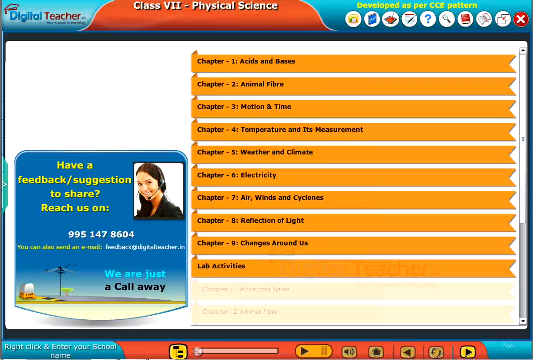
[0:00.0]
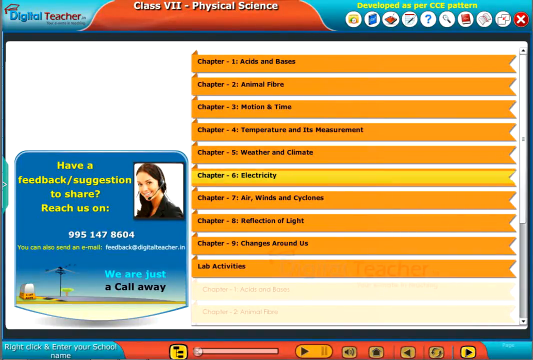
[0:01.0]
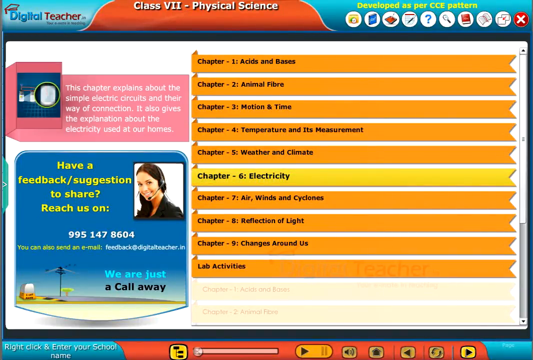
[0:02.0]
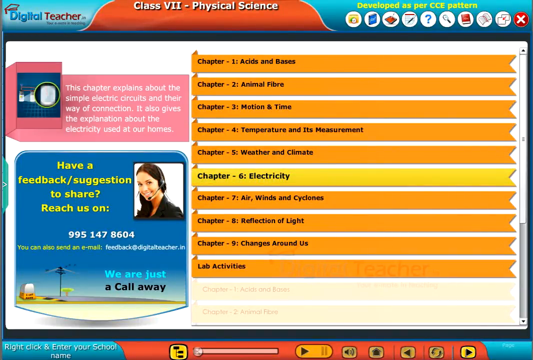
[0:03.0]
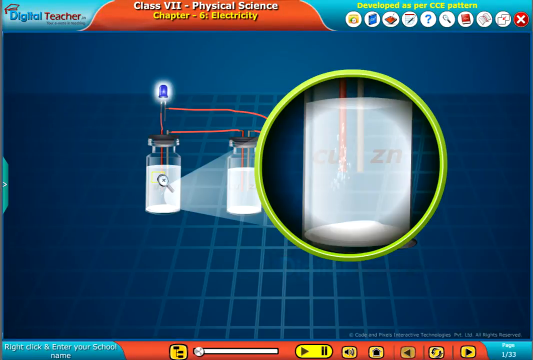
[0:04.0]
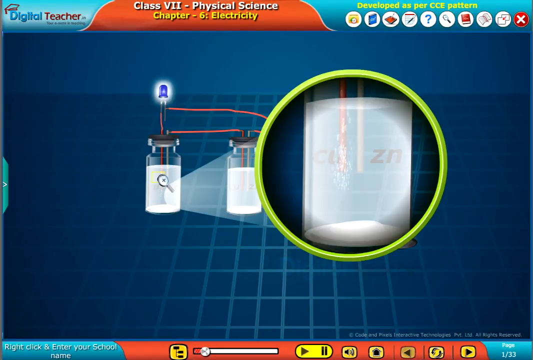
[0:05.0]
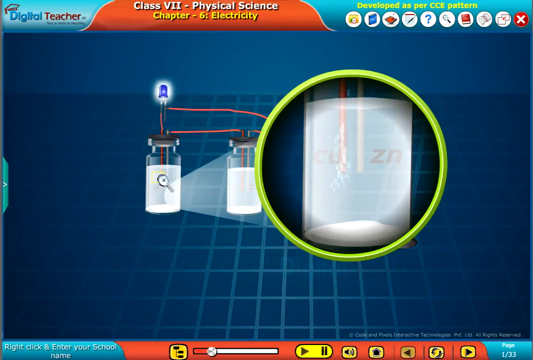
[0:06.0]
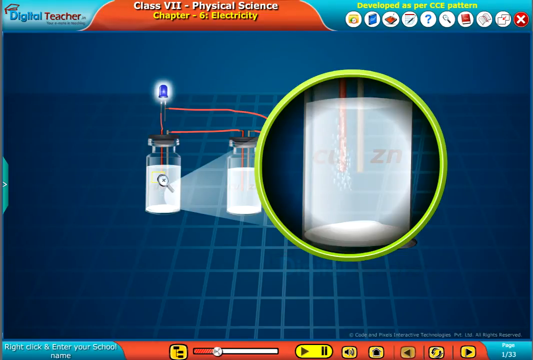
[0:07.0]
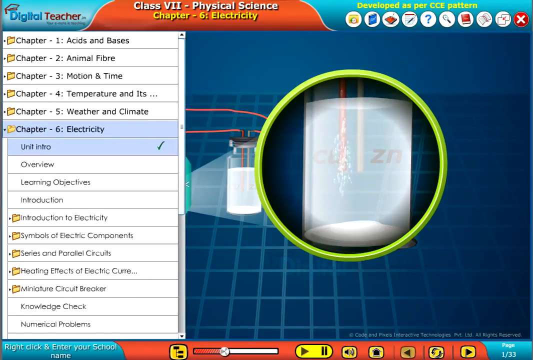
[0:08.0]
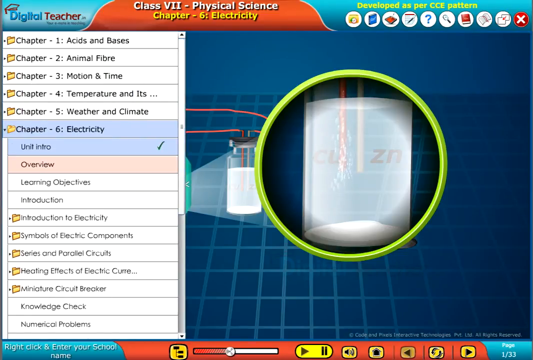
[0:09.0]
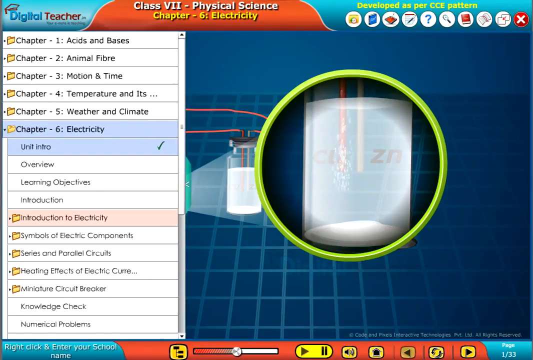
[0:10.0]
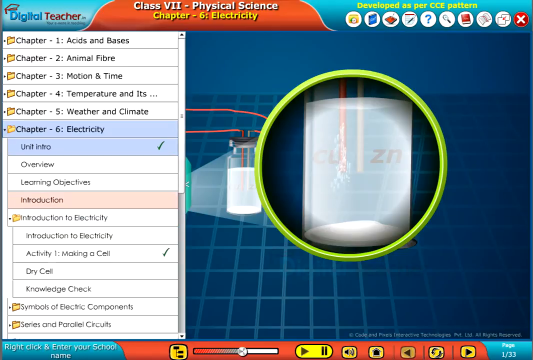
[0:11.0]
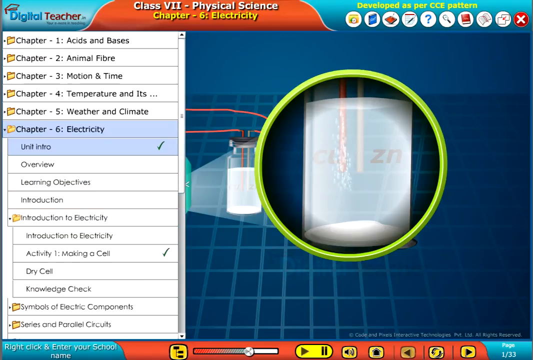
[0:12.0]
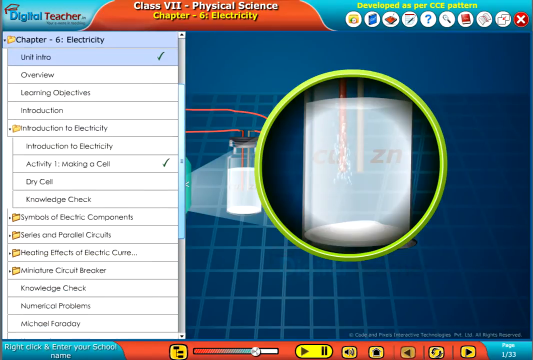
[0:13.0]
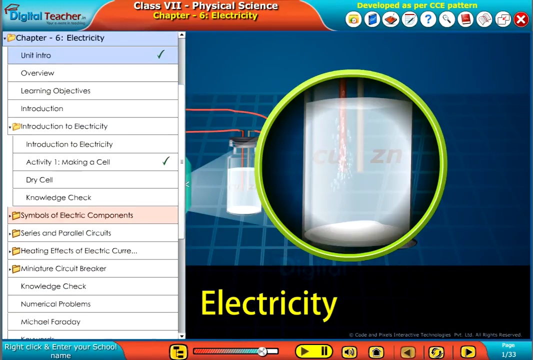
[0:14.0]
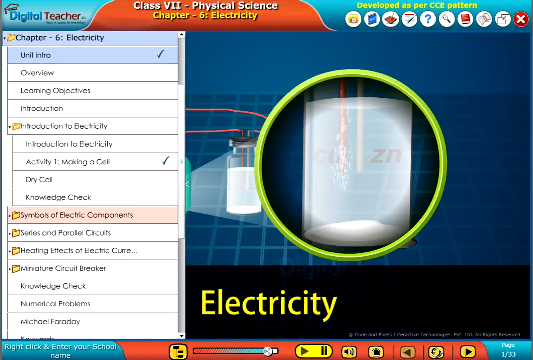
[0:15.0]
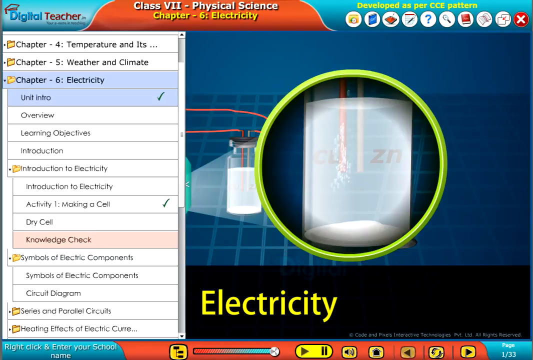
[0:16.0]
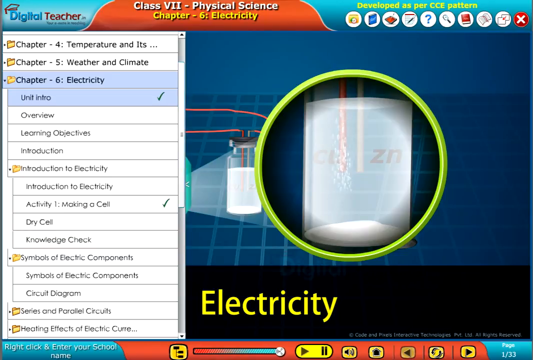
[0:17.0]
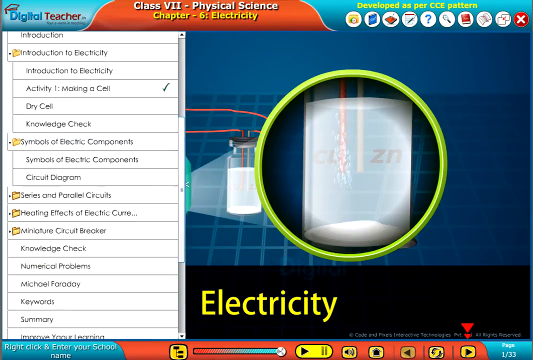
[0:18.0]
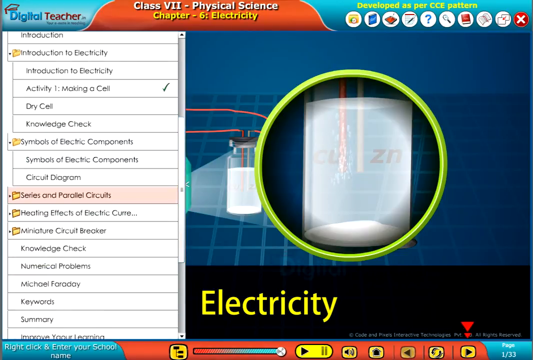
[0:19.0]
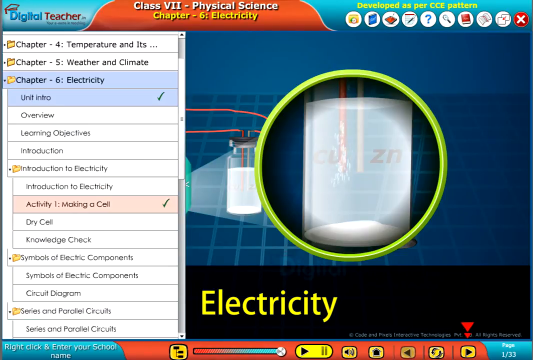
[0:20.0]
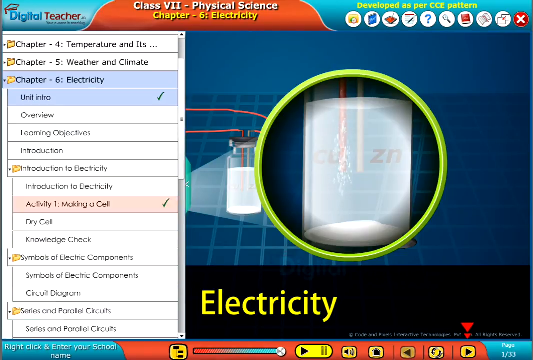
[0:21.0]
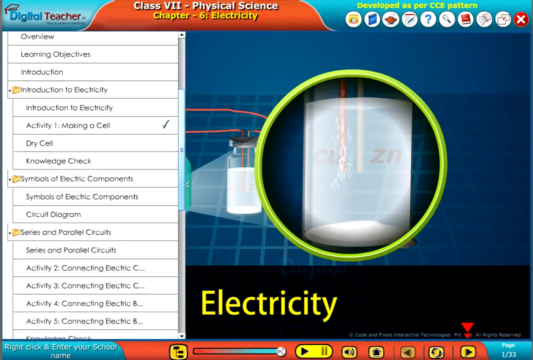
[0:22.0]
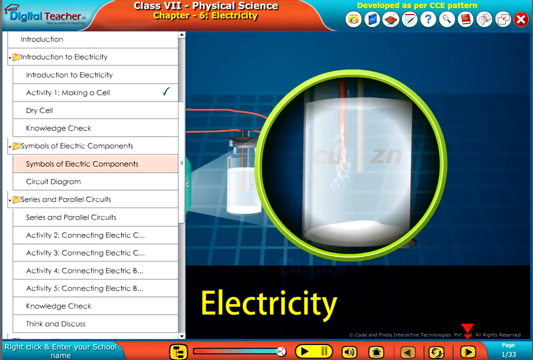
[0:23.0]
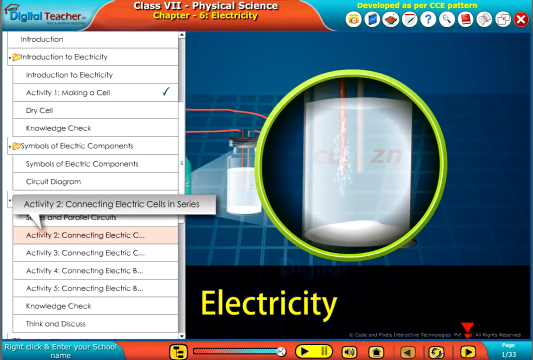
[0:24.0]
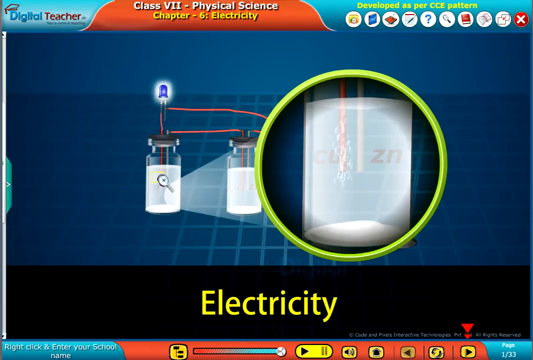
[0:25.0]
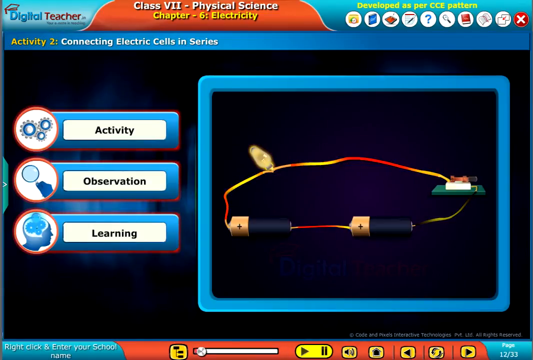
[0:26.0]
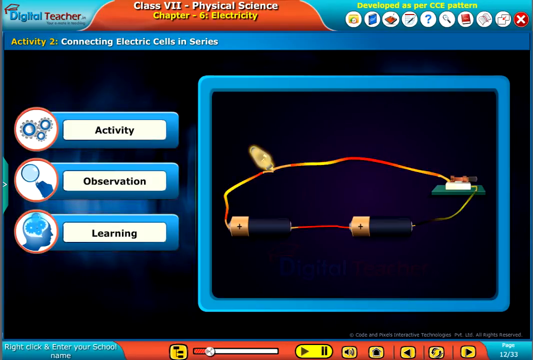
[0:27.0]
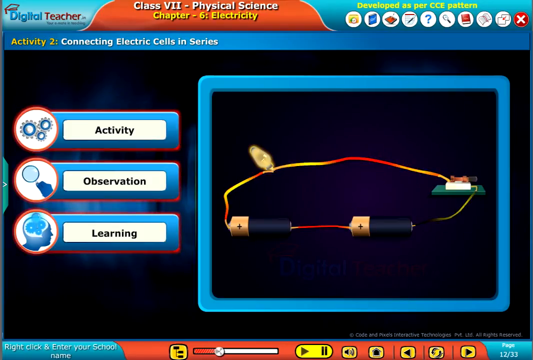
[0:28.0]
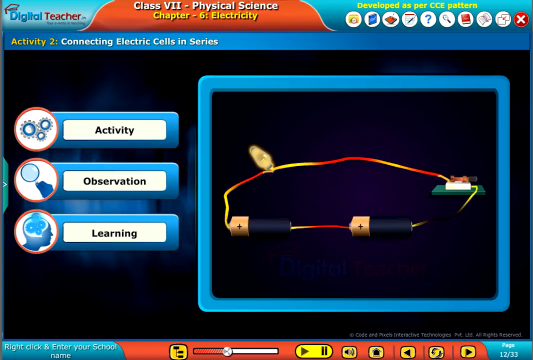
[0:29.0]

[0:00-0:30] The video shows what looks like a computer program, with "digital teacher" written at the top left. The top bar is light blue, maybe turquoise. There is a tab that looks like a calendar folder; it reads "class" seven in Roman numerals and, in white, "physical science". Below that is something in yellow beginning "developed by", which is small and hard to read. There are nine buttons and an X up top. Beneath that in the main screen, orange banners on the right side extend halfway over: nine chapters and a list activity, ten bars in total. At the bottom left is a window that says "have a feedback, suggestion to share, reach us on" with the number 9951478604. It has a little box with a woman with brown hair, in white, wearing a headset, the text "we are just a call away", and a picture of a beach. Electricity is then clicked, leading to a little graph of two connected batteries, and a second, white chart pulls up on the left. The cursor hovers over a few different things, as if deciding what to select. Electricity then seems to pop up in a banner at the bottom, and the program redirects to a screen showing a circuit with two Duracell batteries.